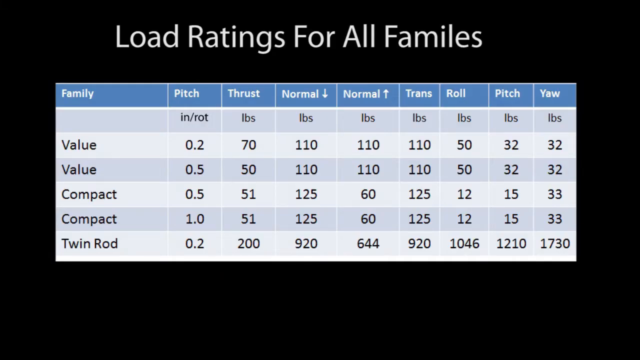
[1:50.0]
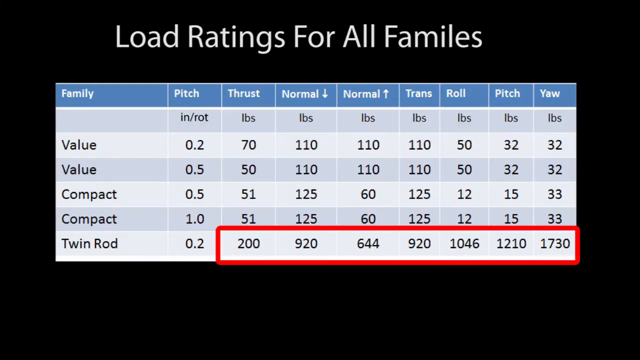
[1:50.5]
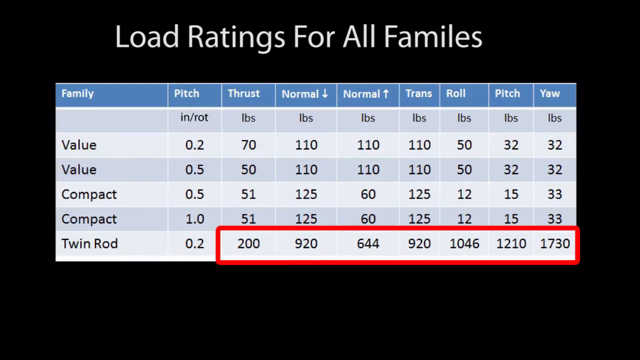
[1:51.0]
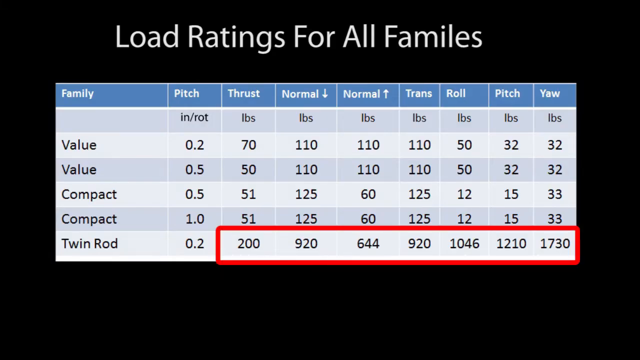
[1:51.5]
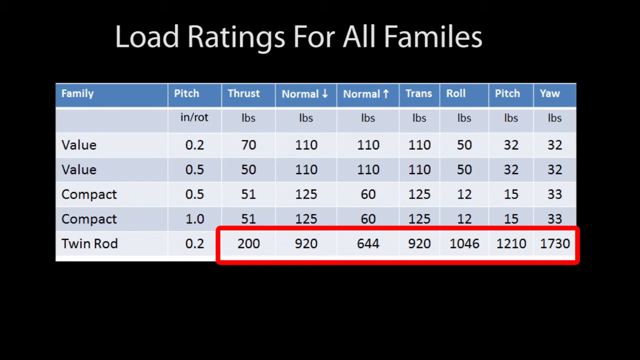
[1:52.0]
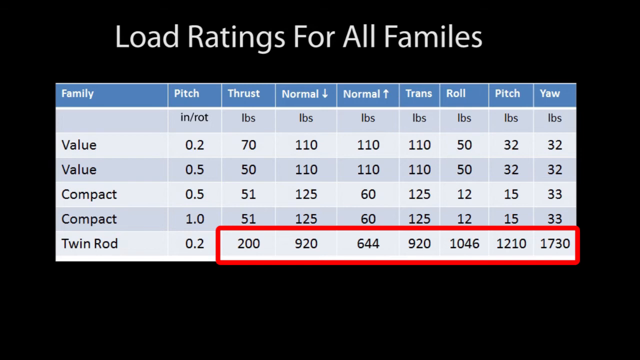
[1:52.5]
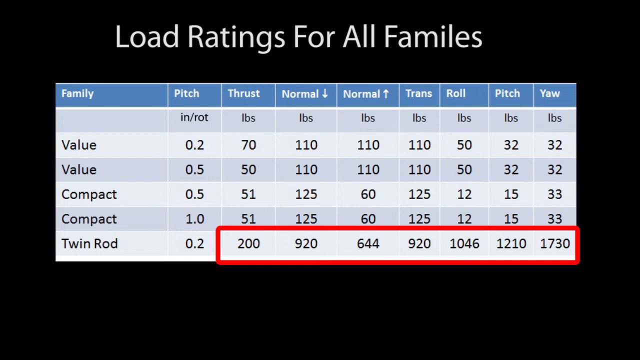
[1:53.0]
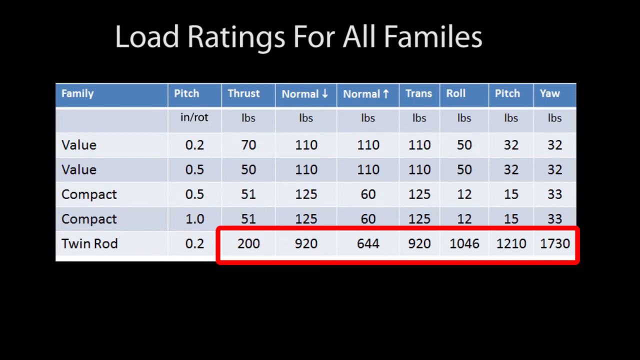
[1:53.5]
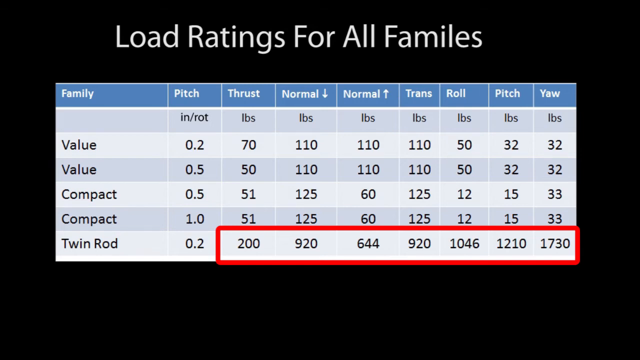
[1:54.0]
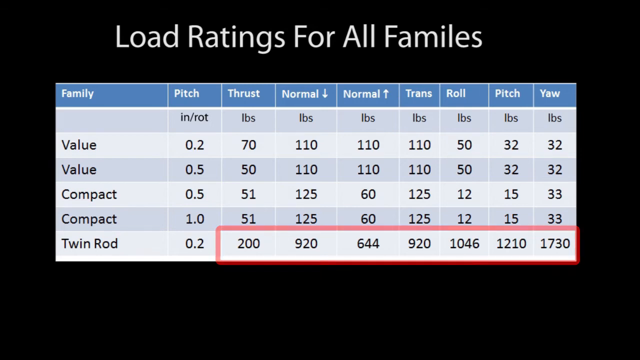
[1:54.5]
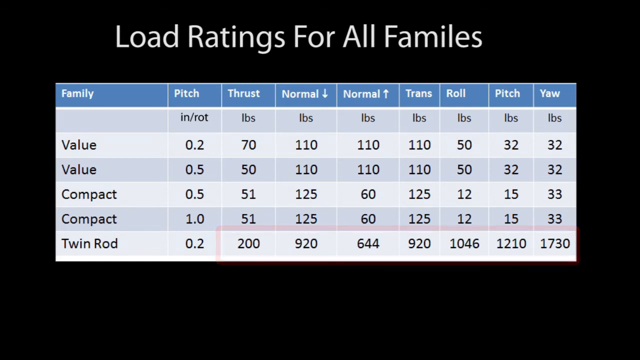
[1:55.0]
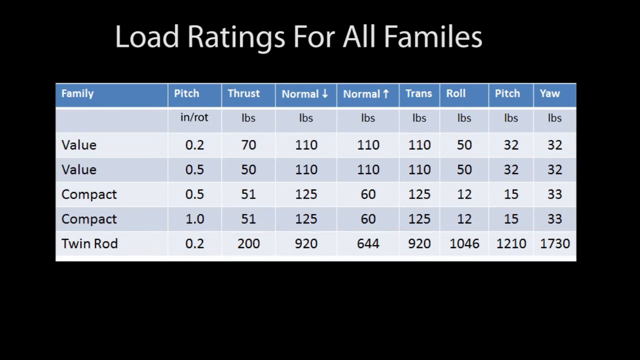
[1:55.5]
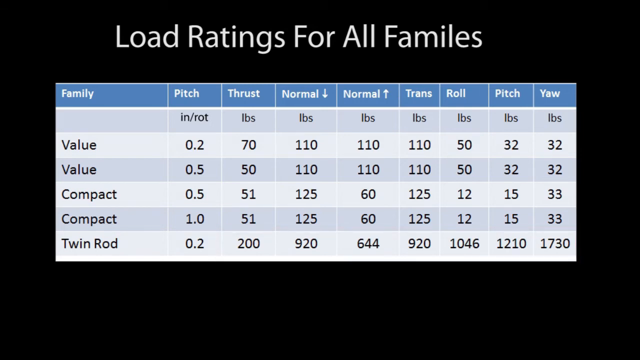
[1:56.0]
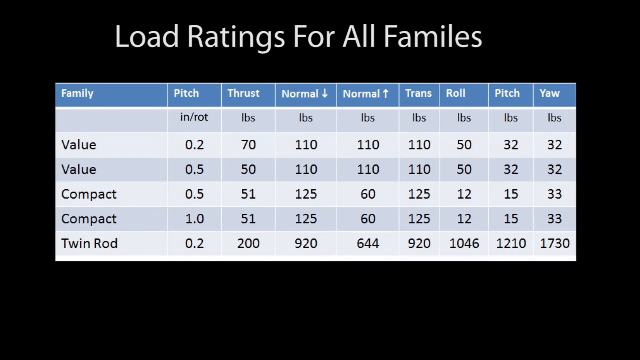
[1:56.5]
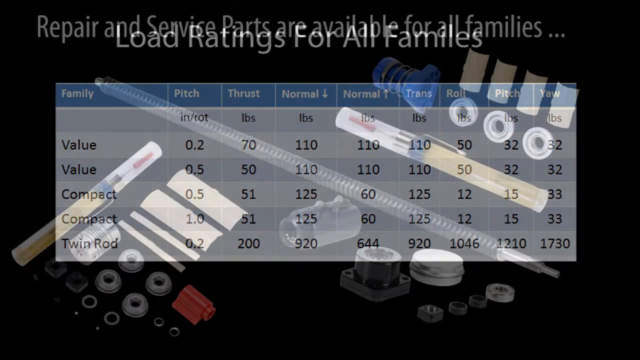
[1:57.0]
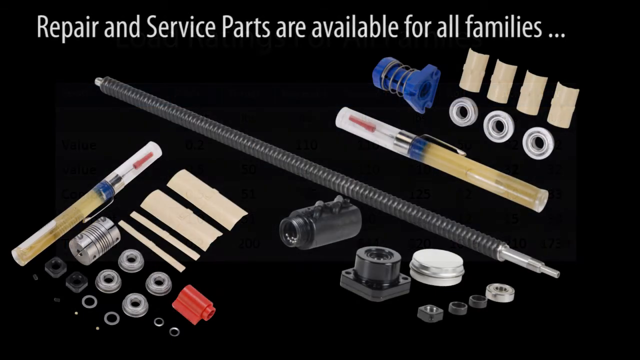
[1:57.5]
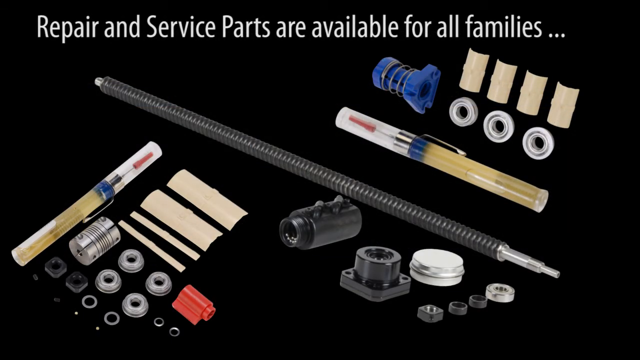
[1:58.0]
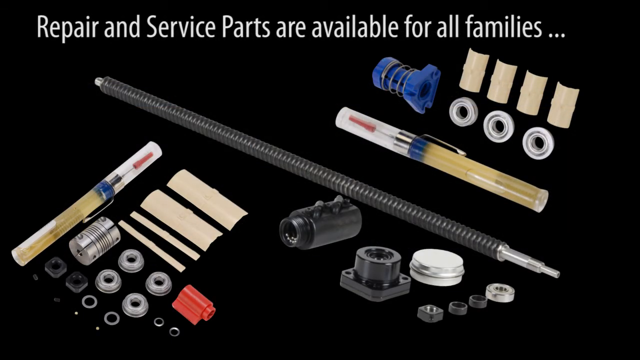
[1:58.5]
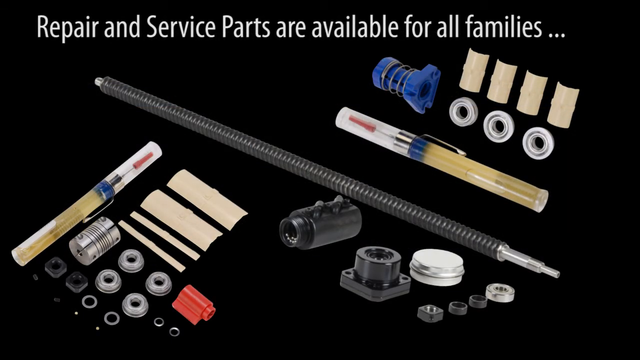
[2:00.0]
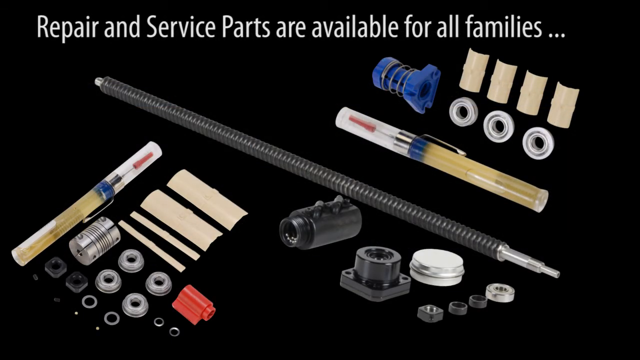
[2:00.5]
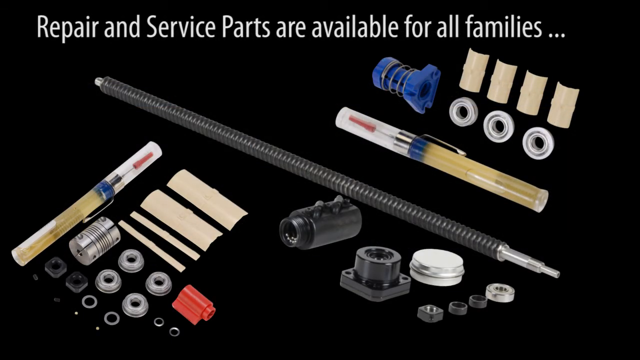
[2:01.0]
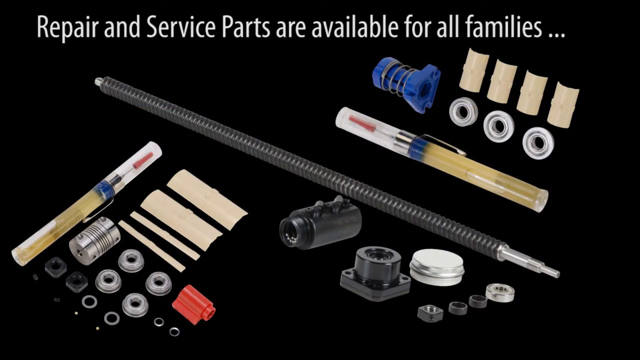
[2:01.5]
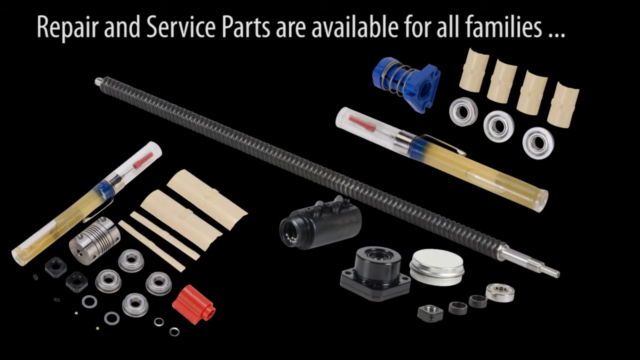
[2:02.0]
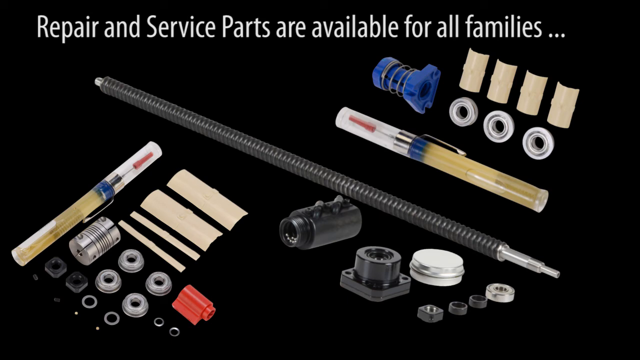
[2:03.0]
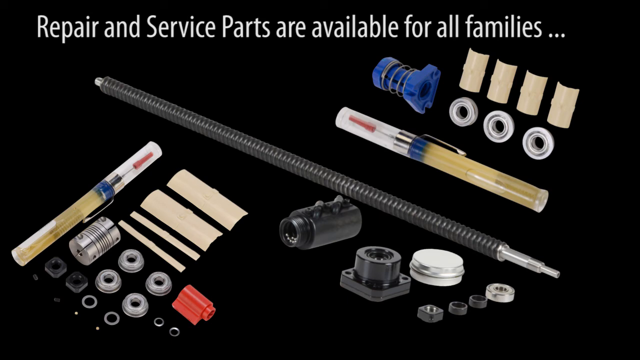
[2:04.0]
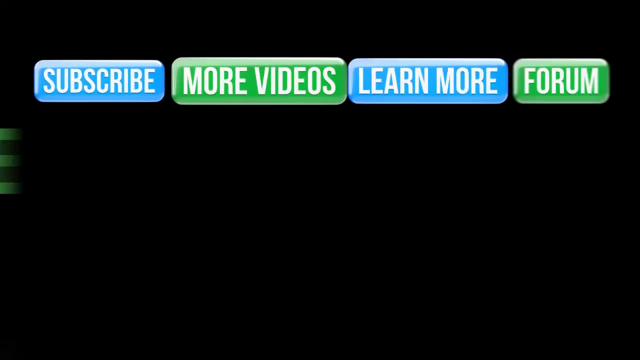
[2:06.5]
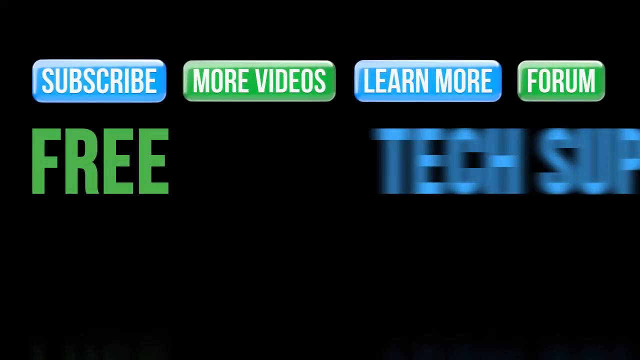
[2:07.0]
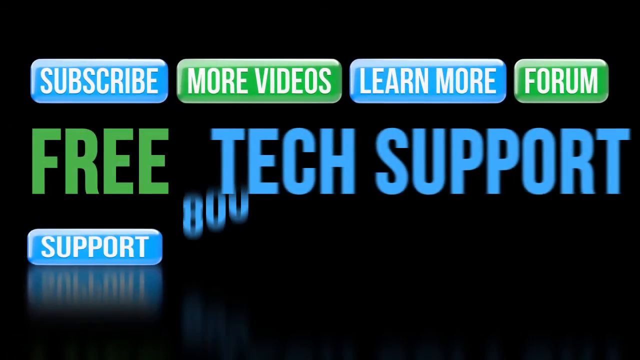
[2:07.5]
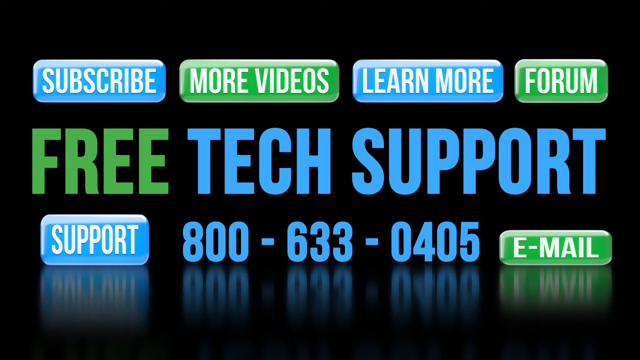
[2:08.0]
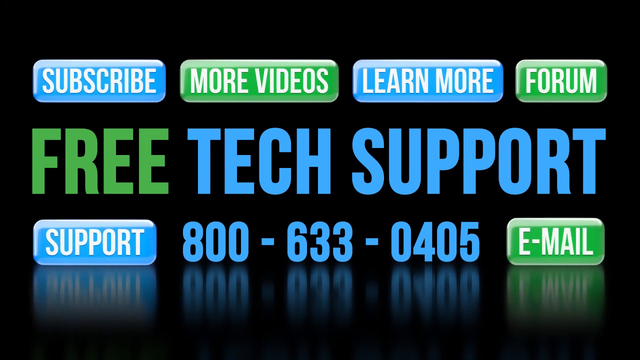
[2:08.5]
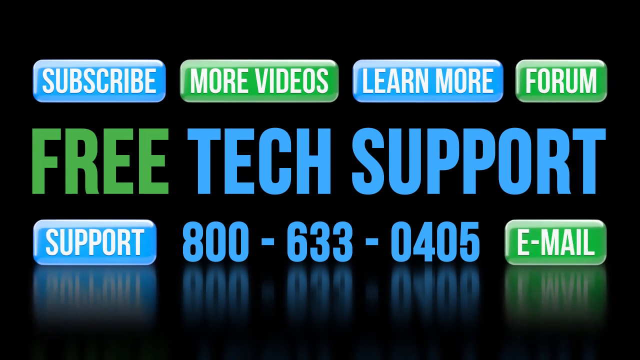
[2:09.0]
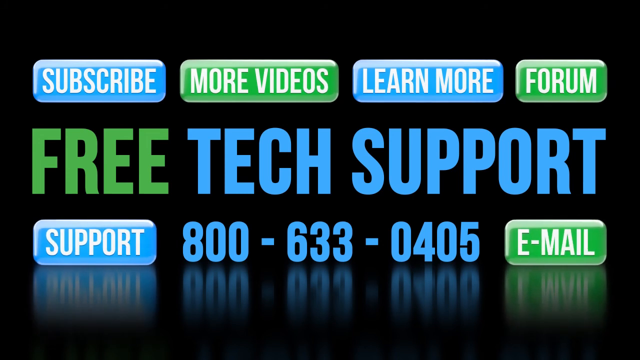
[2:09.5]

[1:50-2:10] Charts showing load values for all of the families, including the compact and twin categories, are displayed over a black background. The next view looks the same.